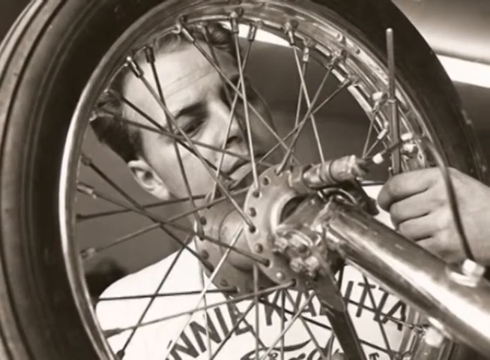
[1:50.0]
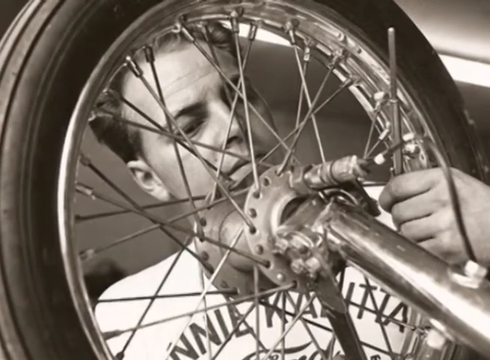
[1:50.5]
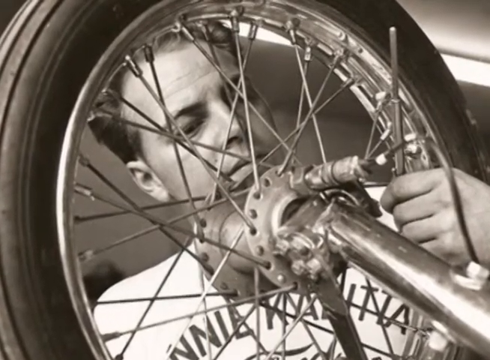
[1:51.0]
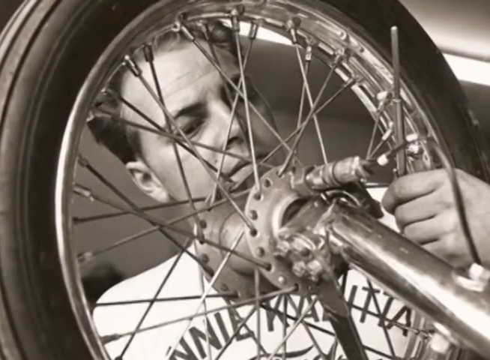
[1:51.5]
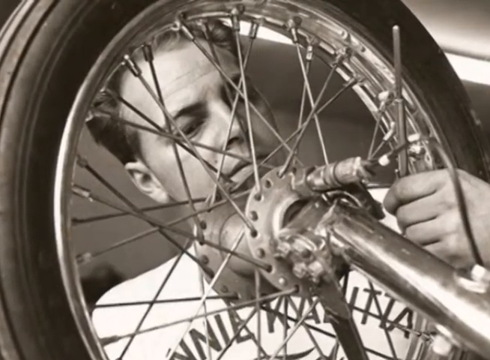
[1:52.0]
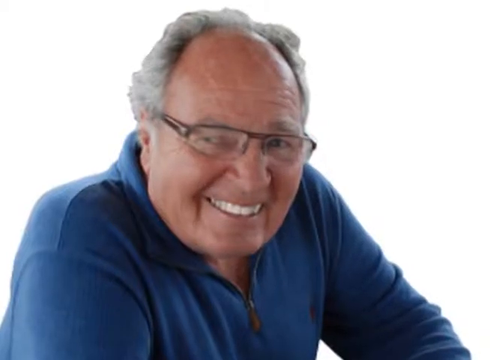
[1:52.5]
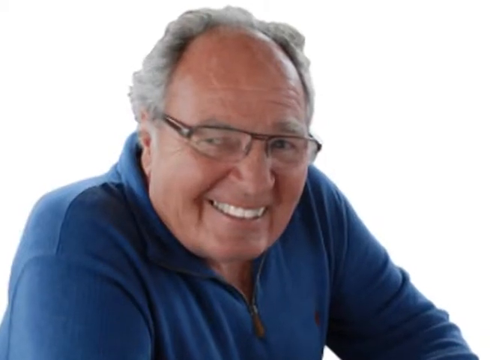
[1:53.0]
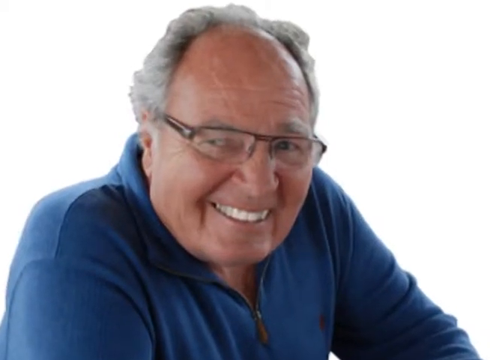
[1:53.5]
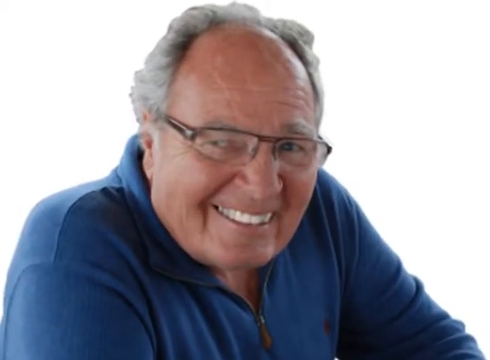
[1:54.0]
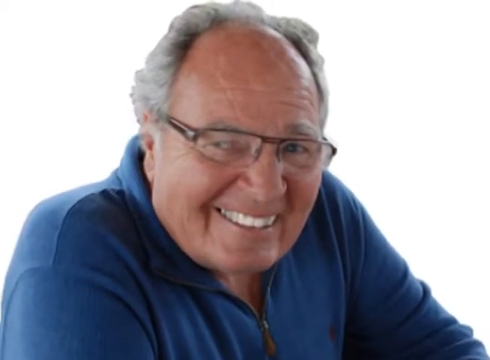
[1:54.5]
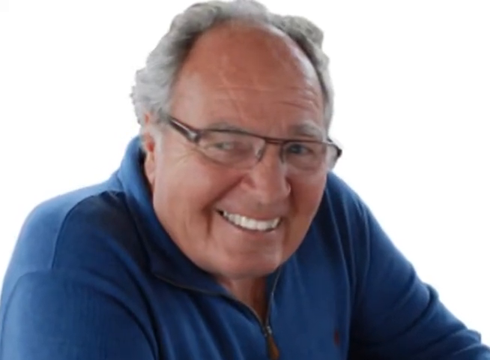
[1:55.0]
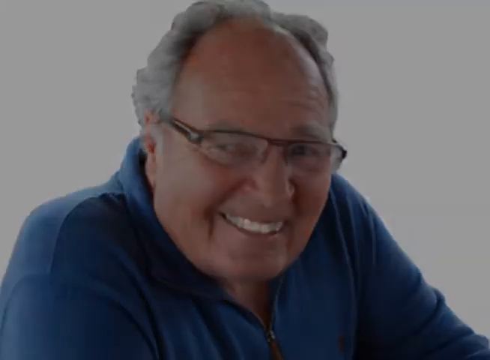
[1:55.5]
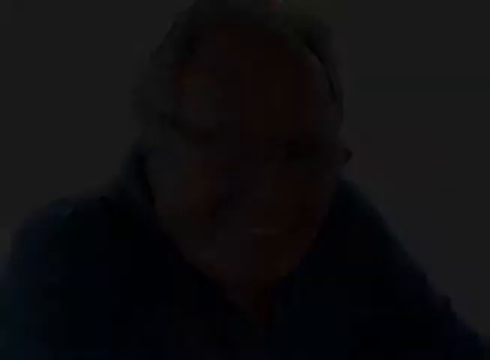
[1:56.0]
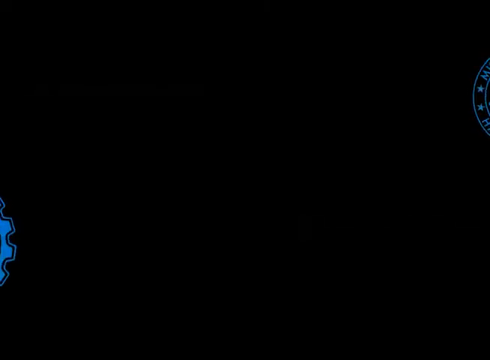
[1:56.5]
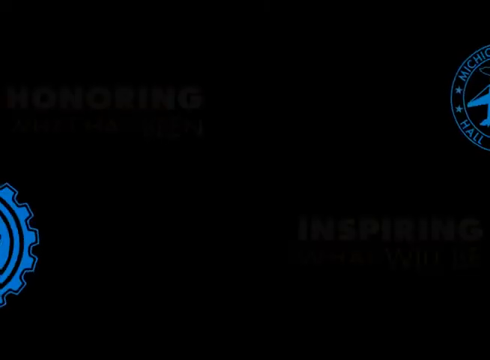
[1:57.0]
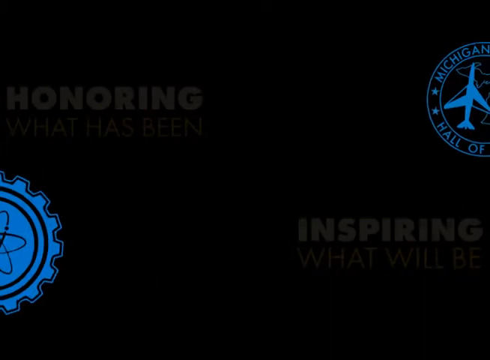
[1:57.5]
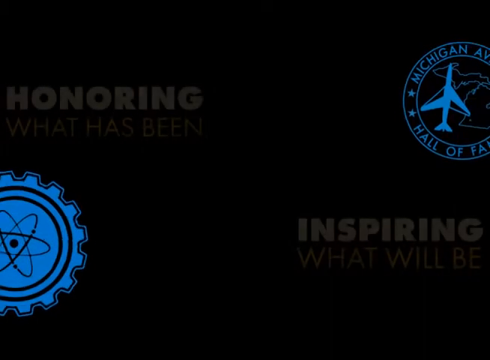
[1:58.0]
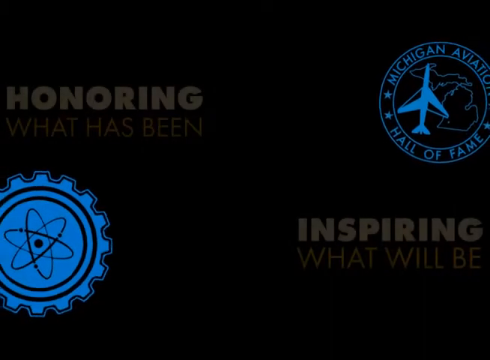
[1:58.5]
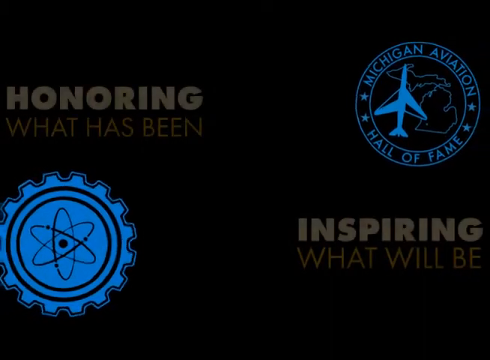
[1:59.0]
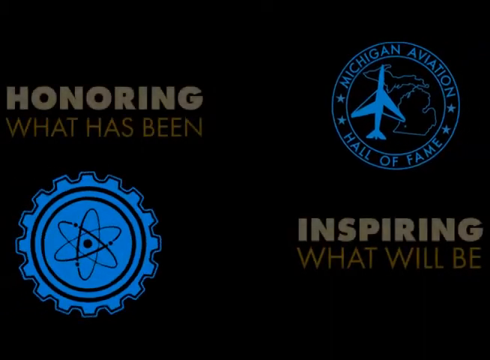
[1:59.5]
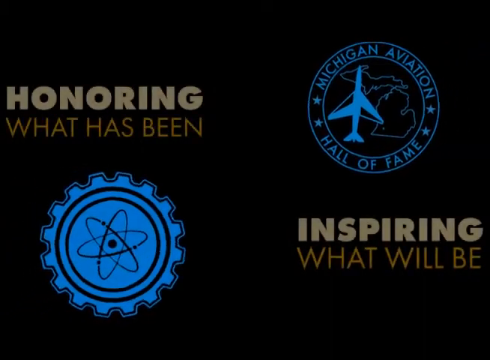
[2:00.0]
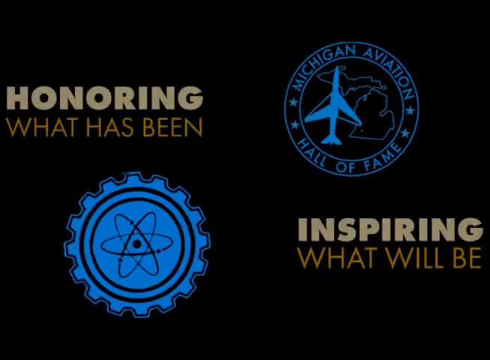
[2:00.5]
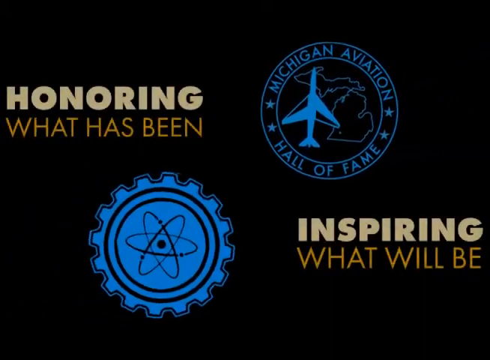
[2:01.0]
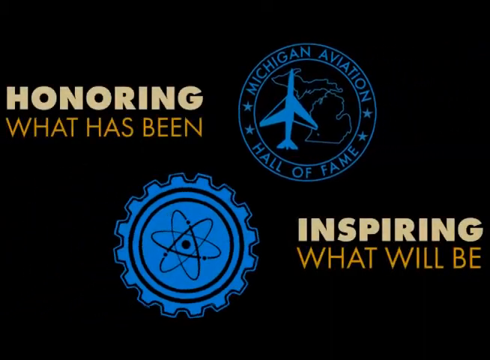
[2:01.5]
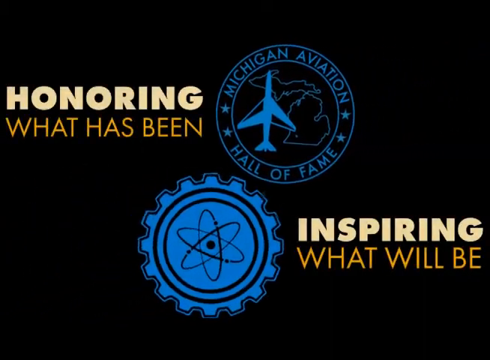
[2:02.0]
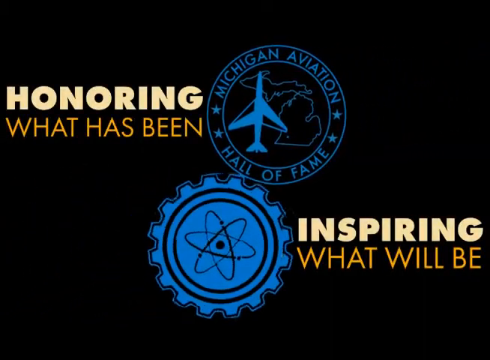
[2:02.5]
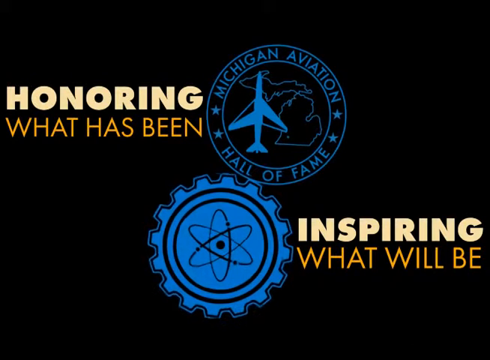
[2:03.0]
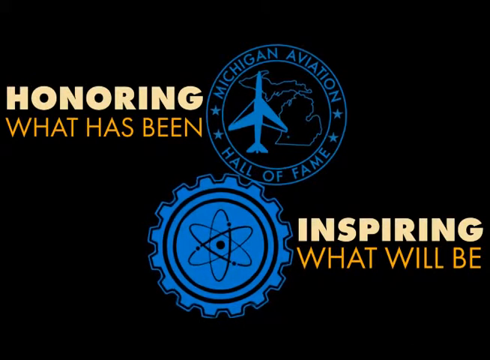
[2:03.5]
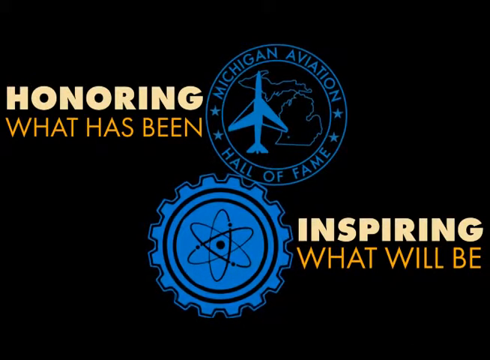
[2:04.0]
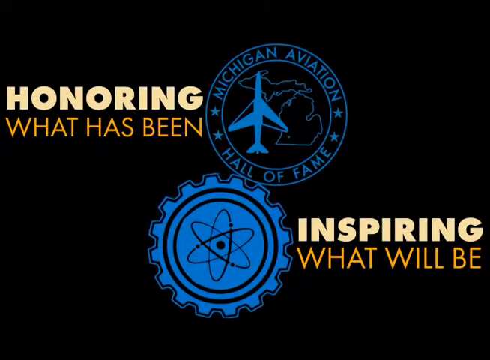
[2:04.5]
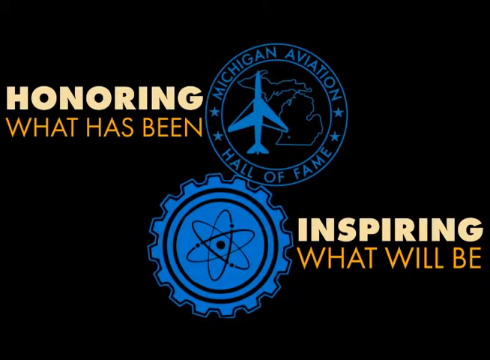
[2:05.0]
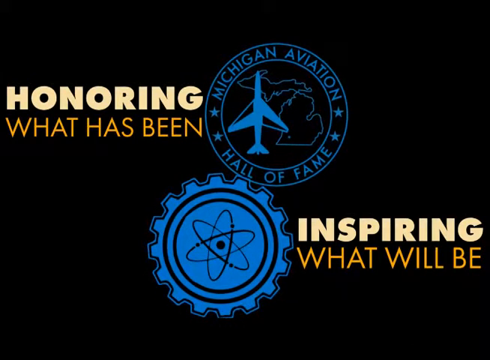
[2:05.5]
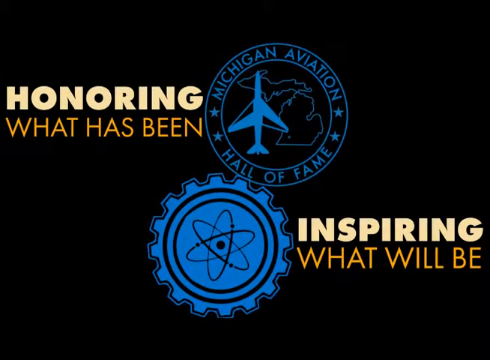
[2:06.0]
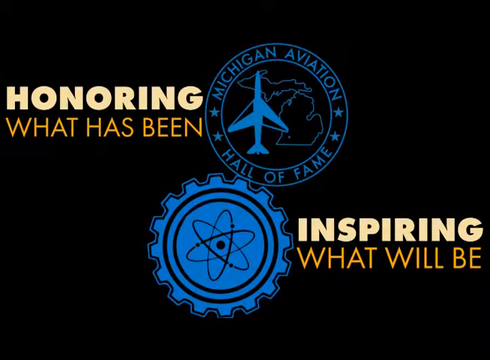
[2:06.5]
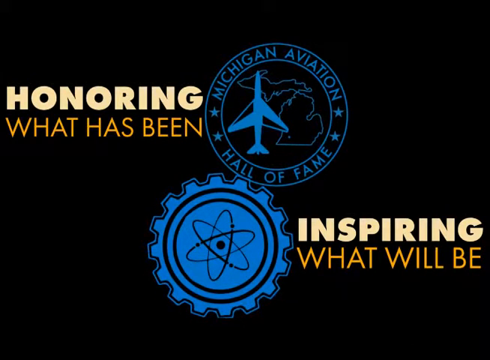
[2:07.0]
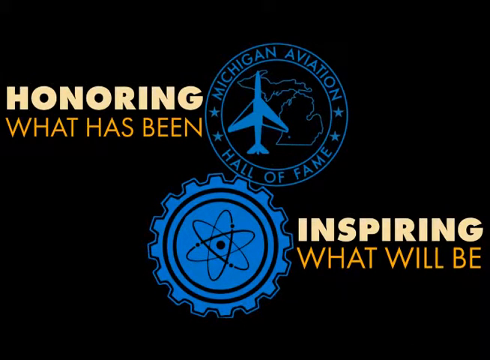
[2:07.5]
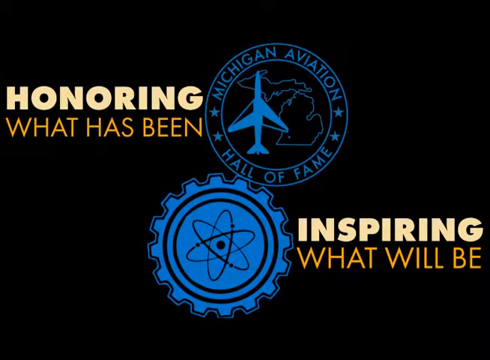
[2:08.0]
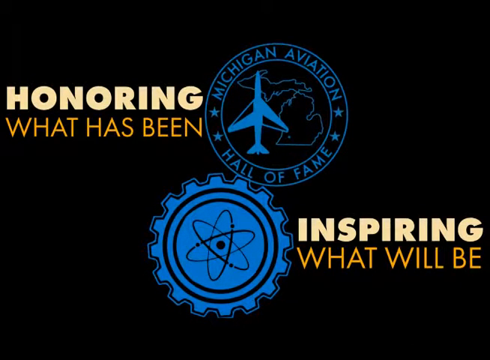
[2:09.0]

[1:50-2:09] An image shows a mature man whose hair is receding and almost all gray, wearing prescription glasses and a blue pullover shirt, with a big smile on his face. The video transitions to a black screen where images roll in from both sides toward the middle: one in the top right corner and one in the bottom left corner, with text beneath the right side and text above the left side. The text above the left side reads "honoring what has been", and the text at the bottom right reads "inspiring what will be". One image is a blue cog wheel with an atom symbol in its middle. The image in the upper right is a circle containing what looks like a plane and two drawn landmasses, with "Michigan Aviation Hall of Fame" around its border and two stars on each side separating the words. The two images come together in the middle along with the text.